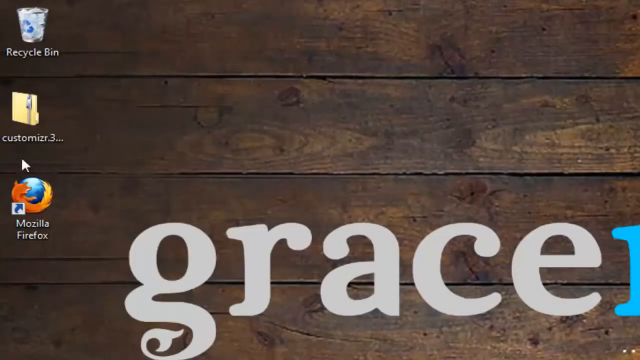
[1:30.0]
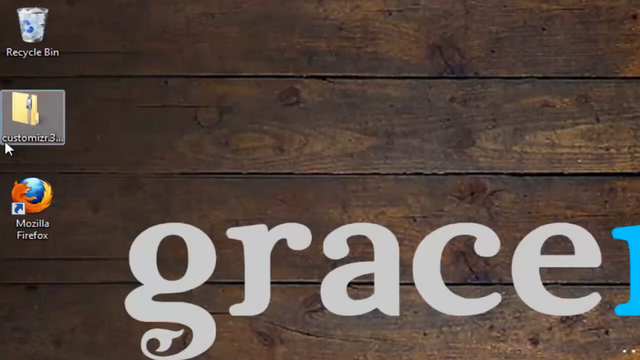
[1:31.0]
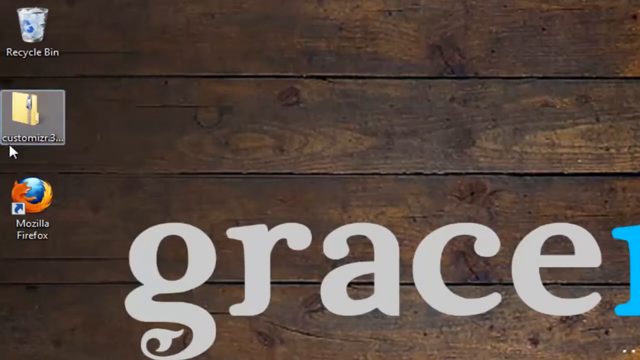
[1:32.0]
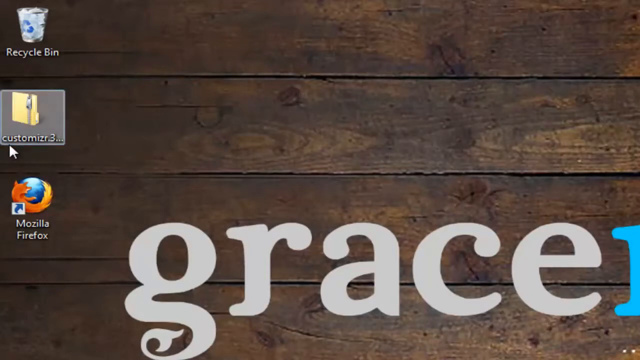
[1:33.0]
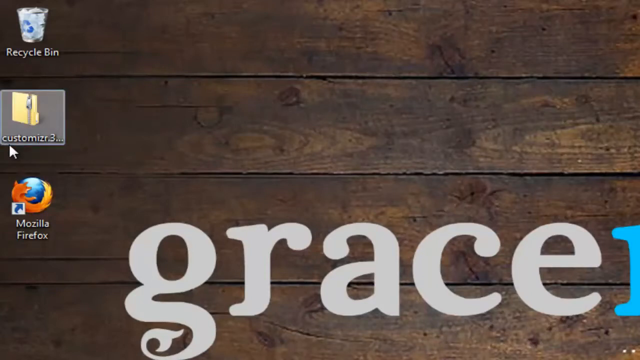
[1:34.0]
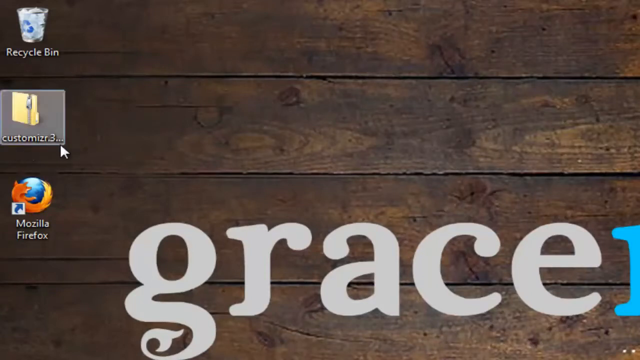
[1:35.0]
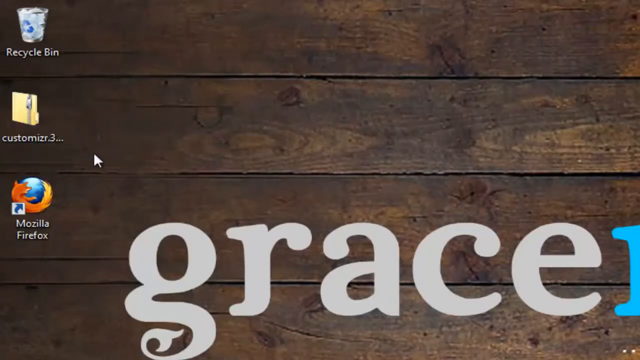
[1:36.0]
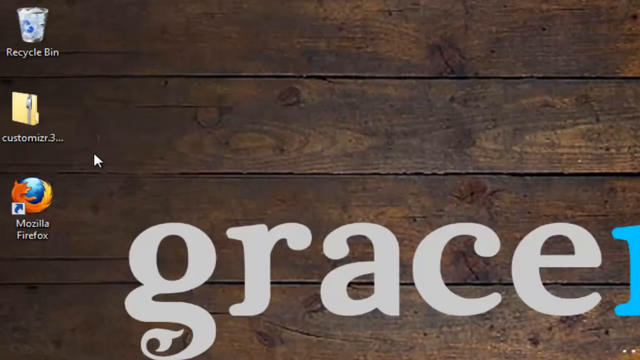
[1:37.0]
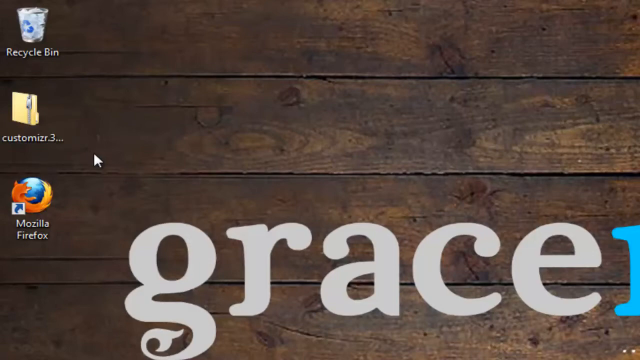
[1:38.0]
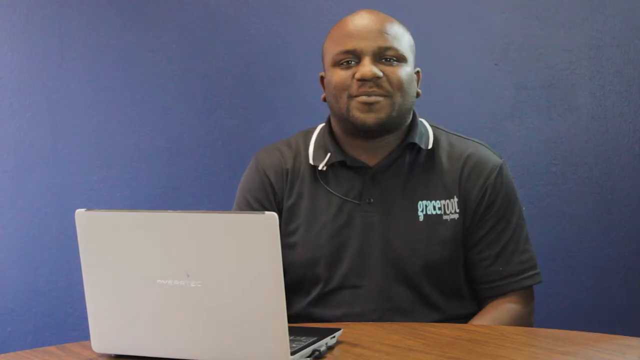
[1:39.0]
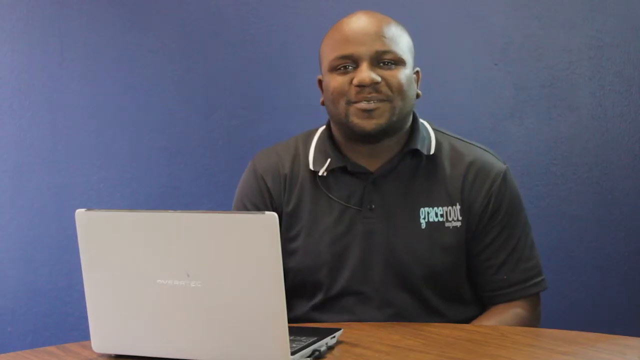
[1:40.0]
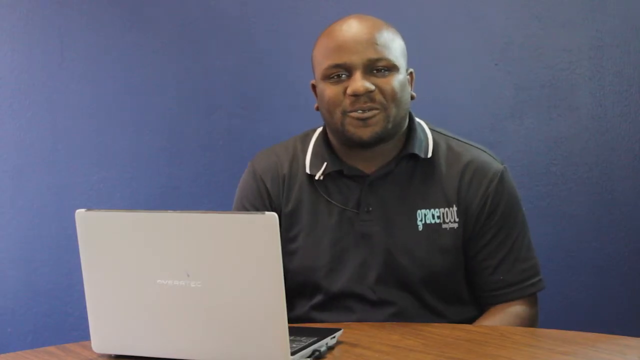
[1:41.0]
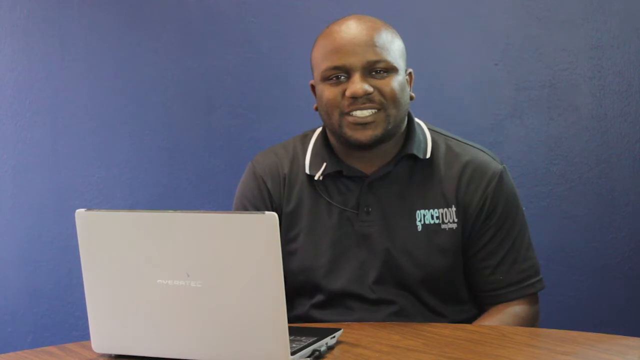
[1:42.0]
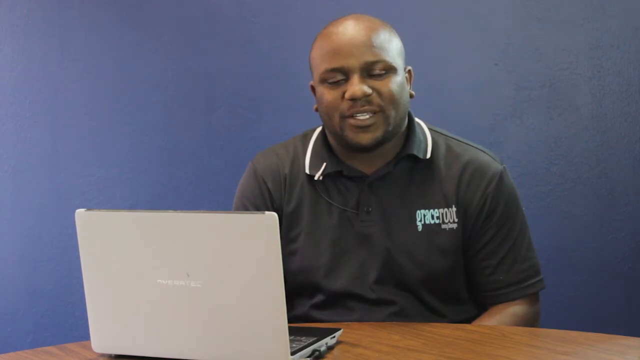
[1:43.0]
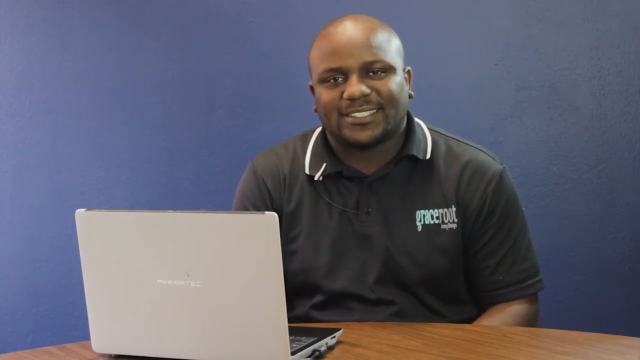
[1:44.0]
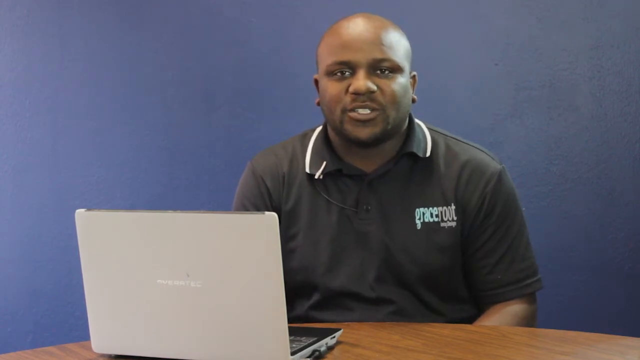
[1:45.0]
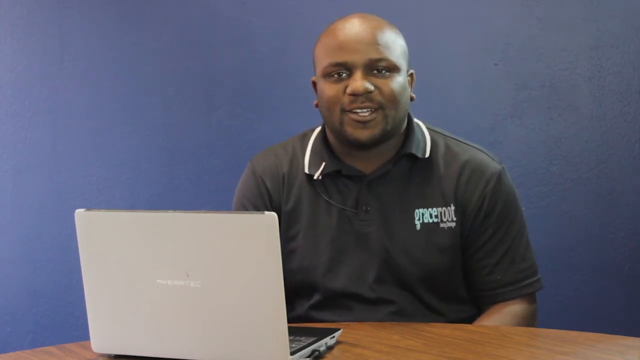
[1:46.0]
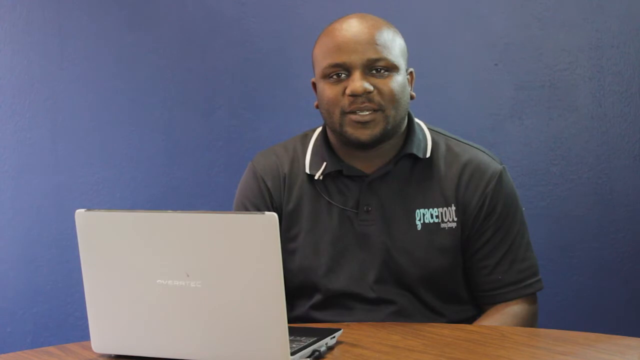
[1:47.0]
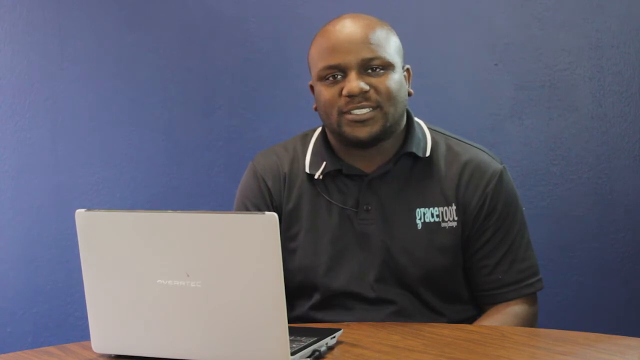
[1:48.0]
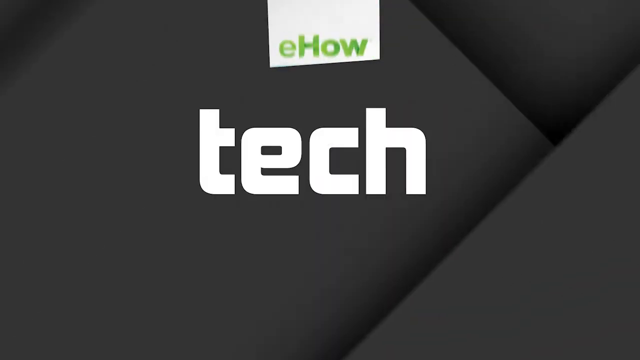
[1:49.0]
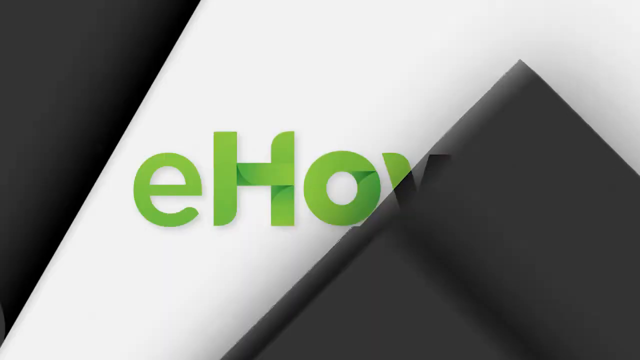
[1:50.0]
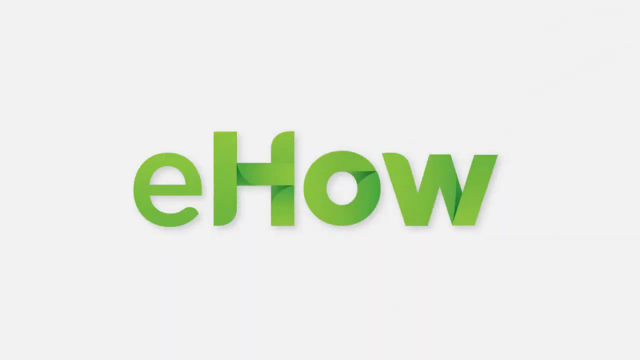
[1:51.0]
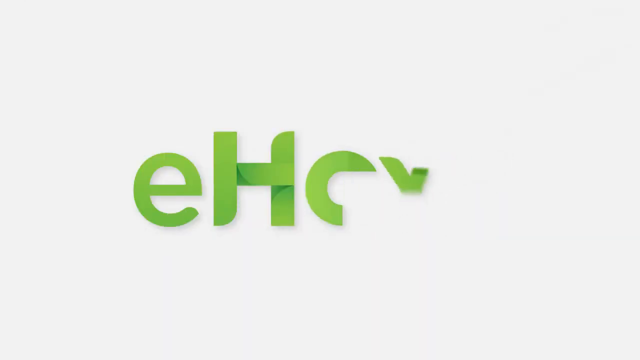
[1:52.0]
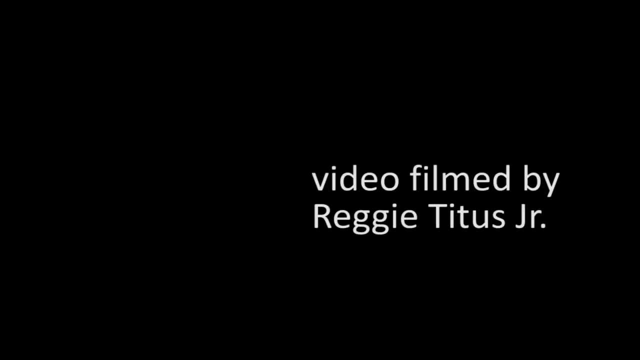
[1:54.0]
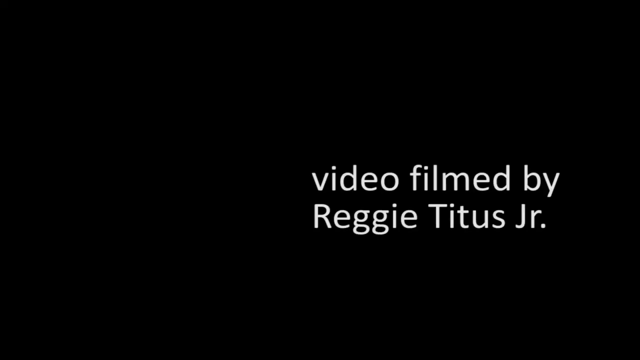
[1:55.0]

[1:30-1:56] The creative director appears, and a credit reads a film by Reggie Titus Jr. The WordPress themes directory is shown, inviting people looking for WordPress themes to find them there, welcoming them to the free directory, and mentioning designing a website live from the WP Customize screen, choosing options and logging in.